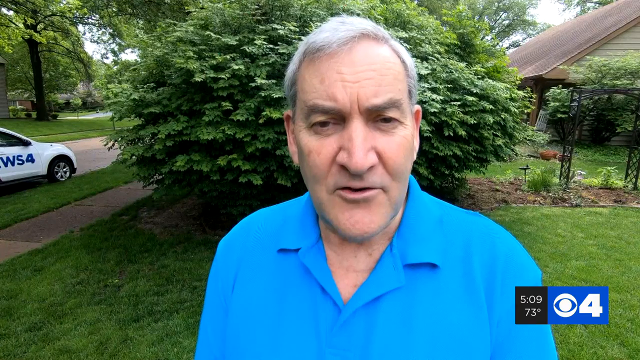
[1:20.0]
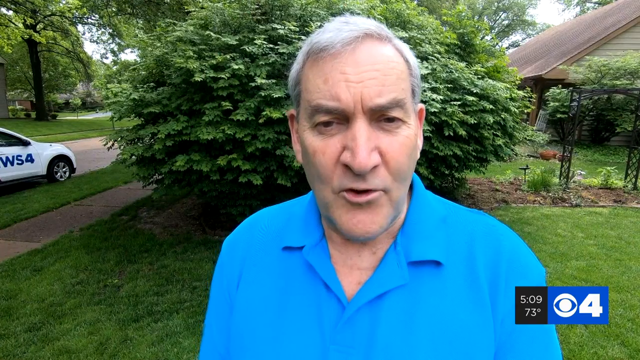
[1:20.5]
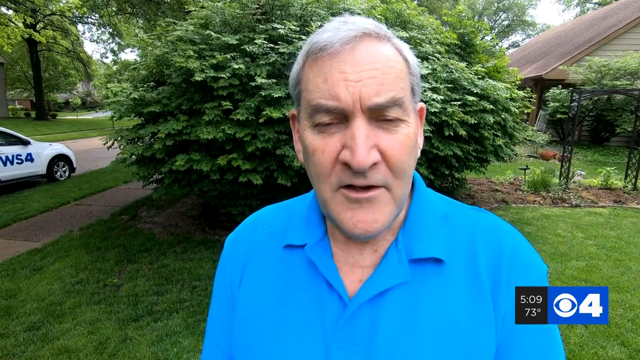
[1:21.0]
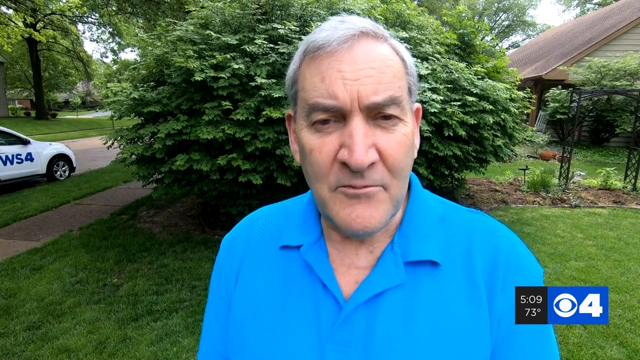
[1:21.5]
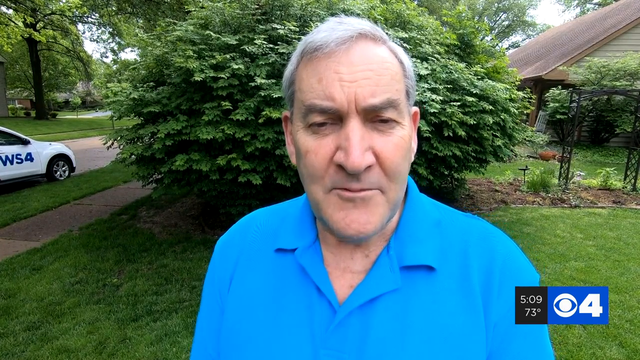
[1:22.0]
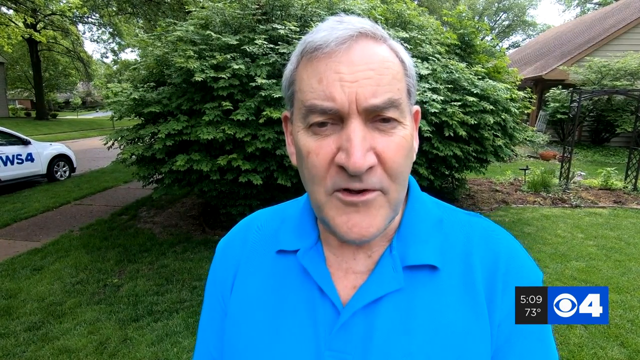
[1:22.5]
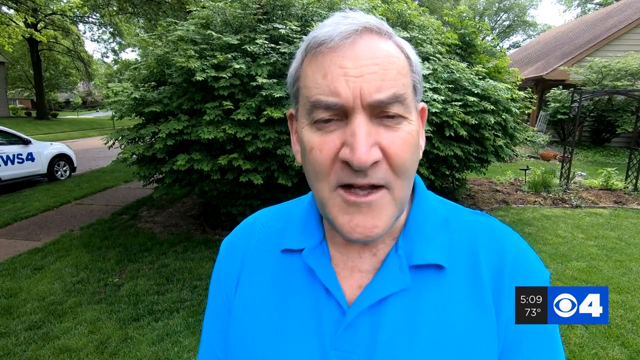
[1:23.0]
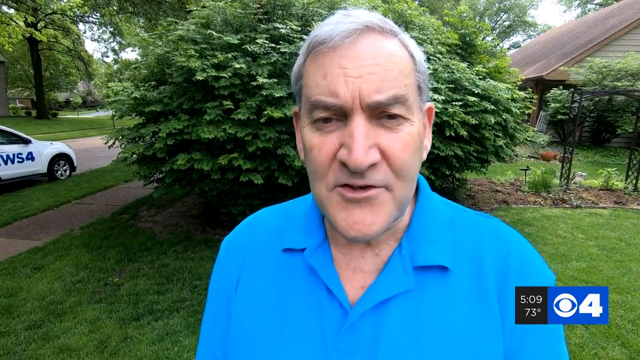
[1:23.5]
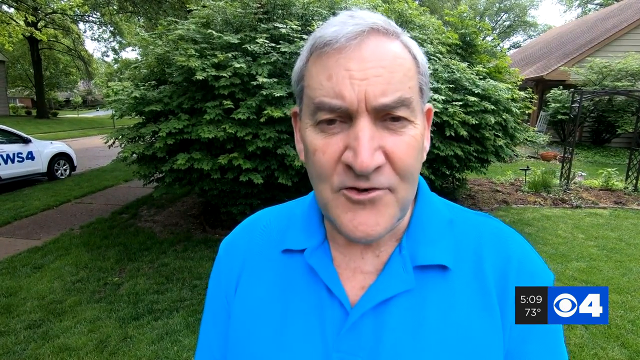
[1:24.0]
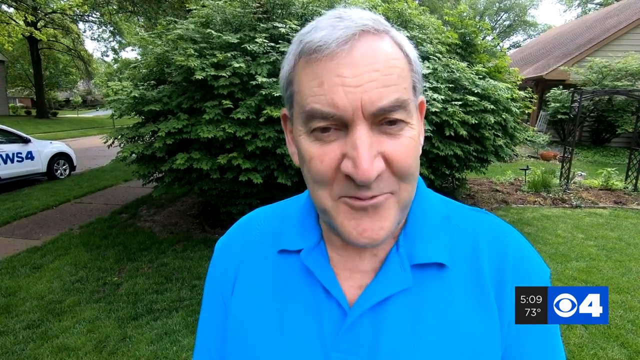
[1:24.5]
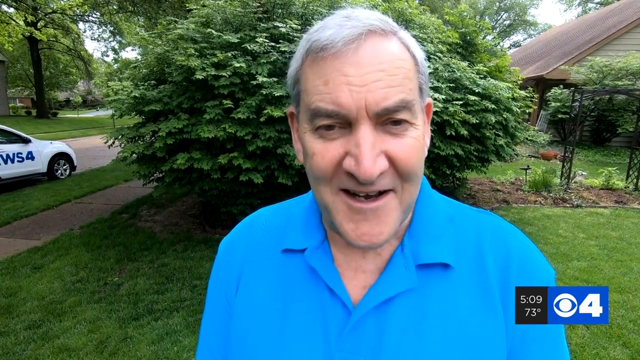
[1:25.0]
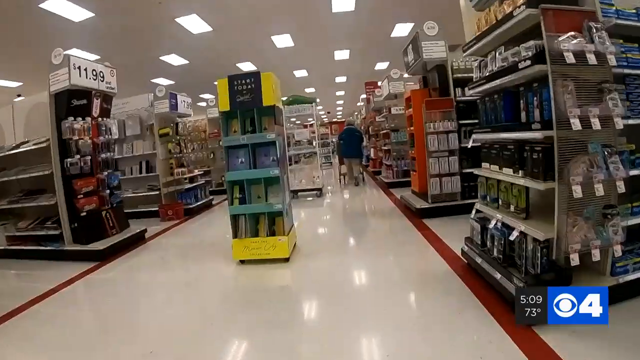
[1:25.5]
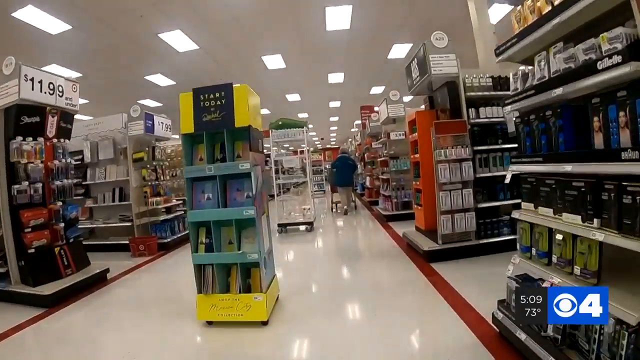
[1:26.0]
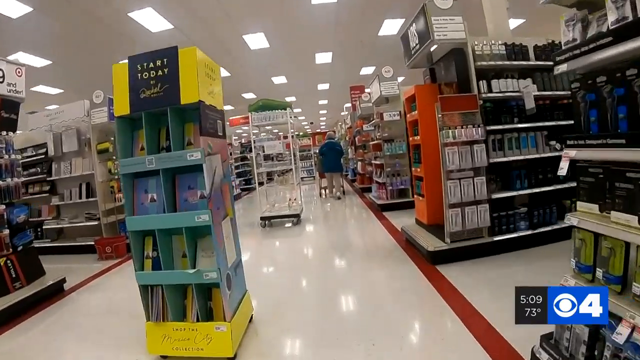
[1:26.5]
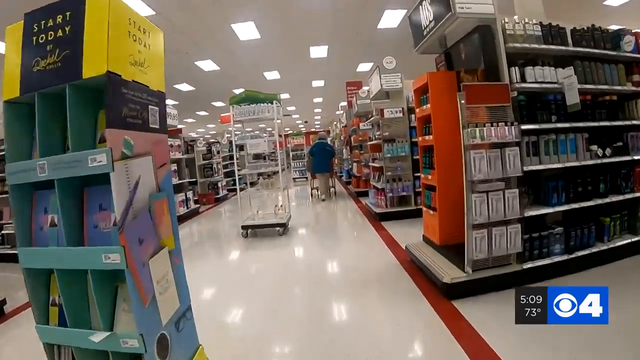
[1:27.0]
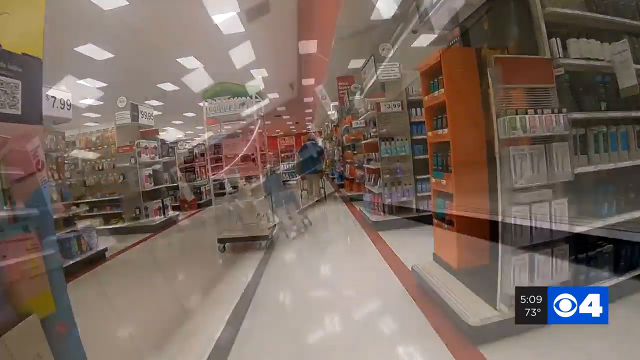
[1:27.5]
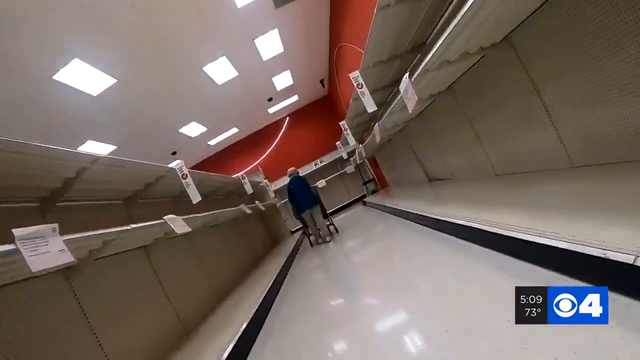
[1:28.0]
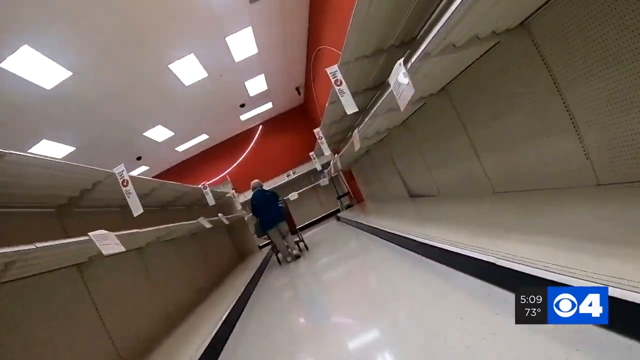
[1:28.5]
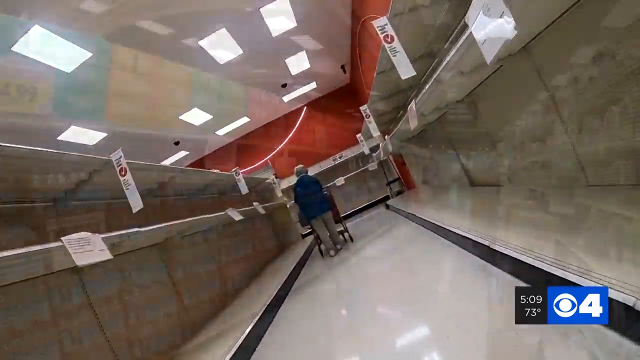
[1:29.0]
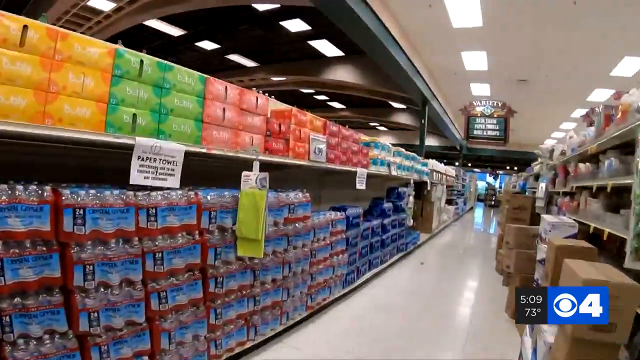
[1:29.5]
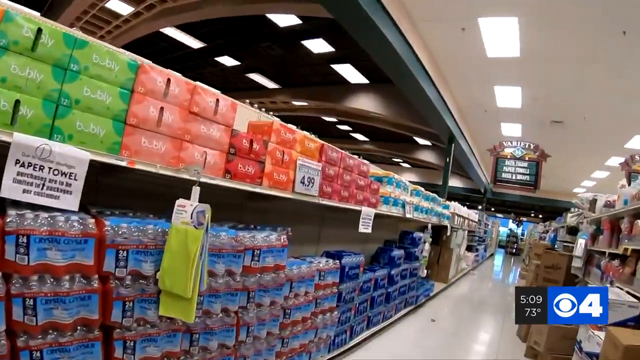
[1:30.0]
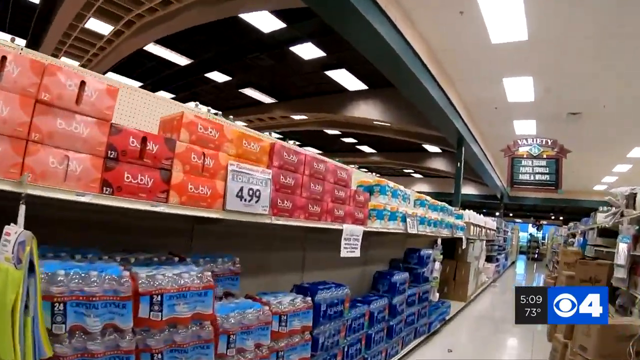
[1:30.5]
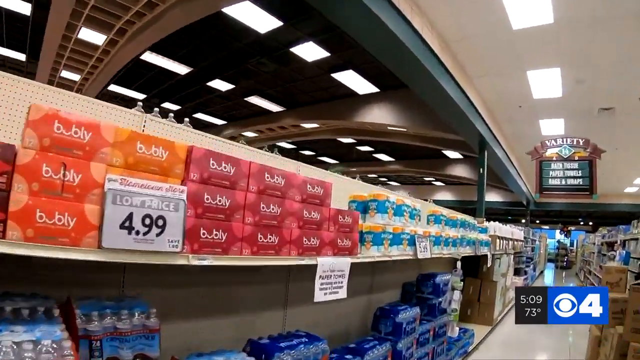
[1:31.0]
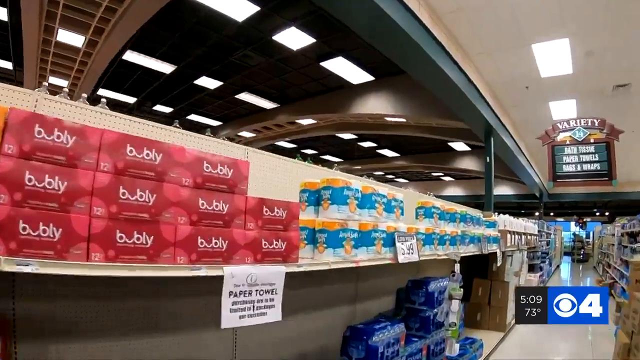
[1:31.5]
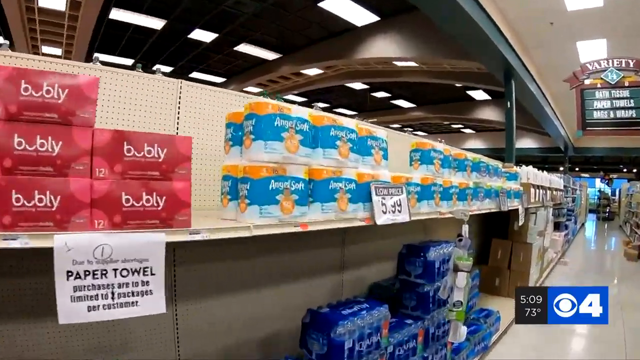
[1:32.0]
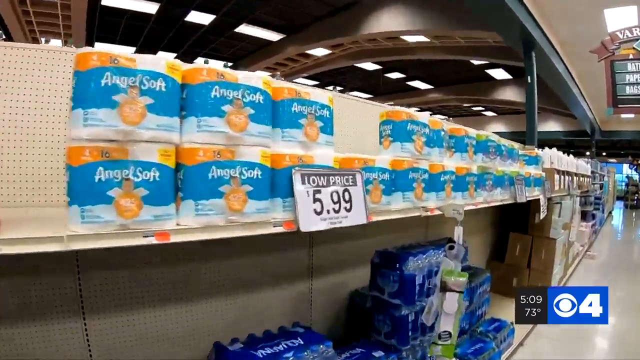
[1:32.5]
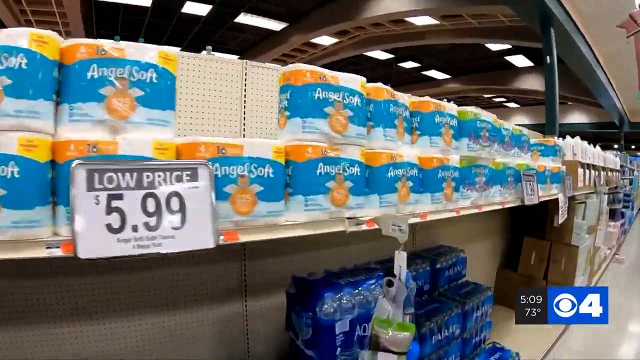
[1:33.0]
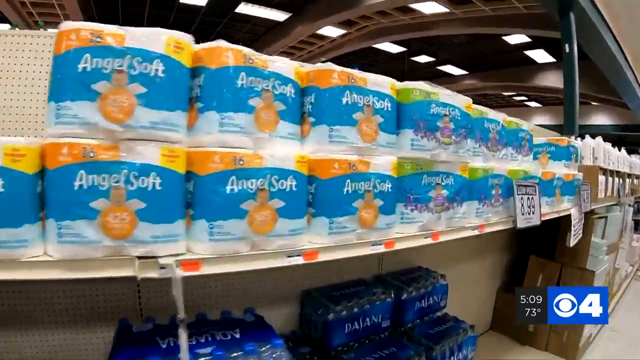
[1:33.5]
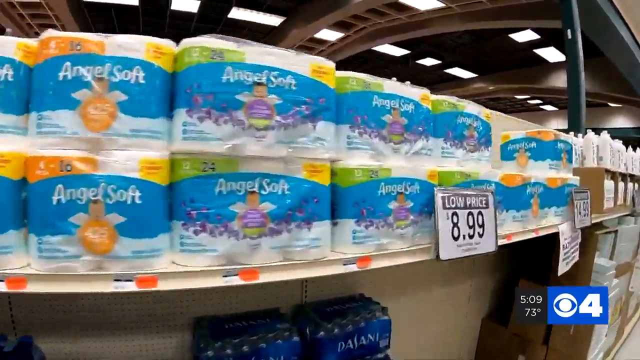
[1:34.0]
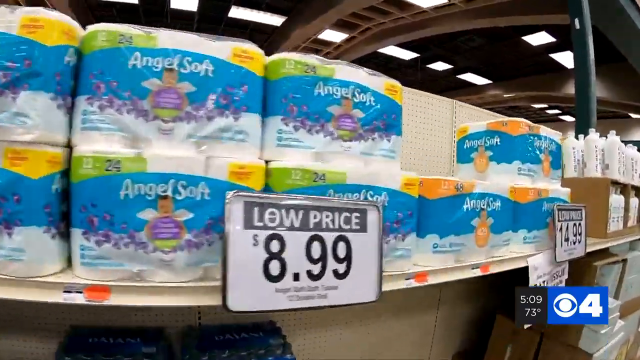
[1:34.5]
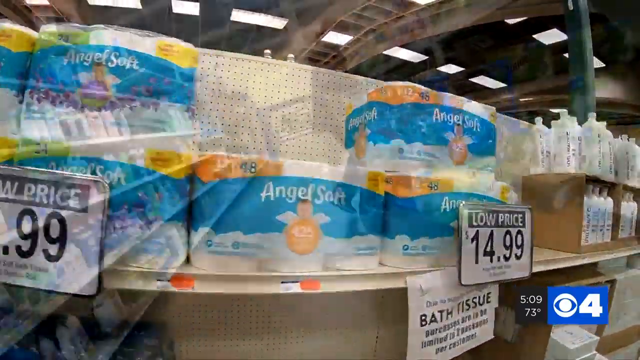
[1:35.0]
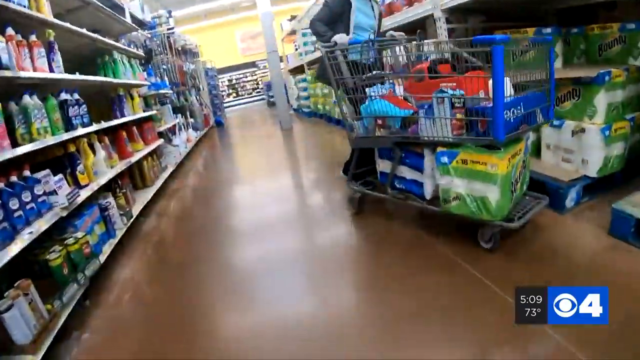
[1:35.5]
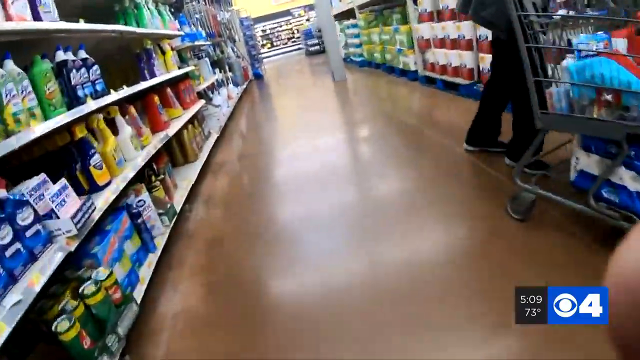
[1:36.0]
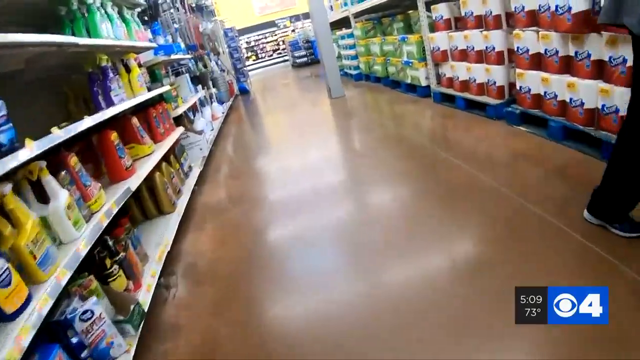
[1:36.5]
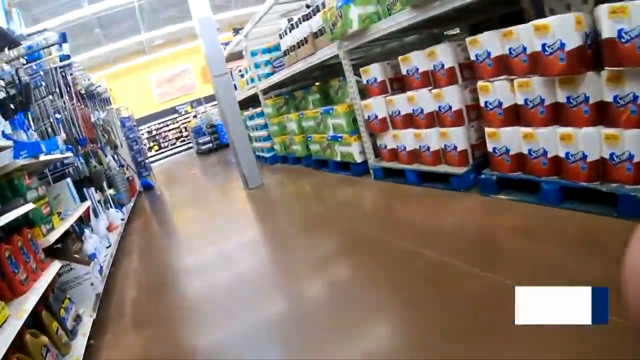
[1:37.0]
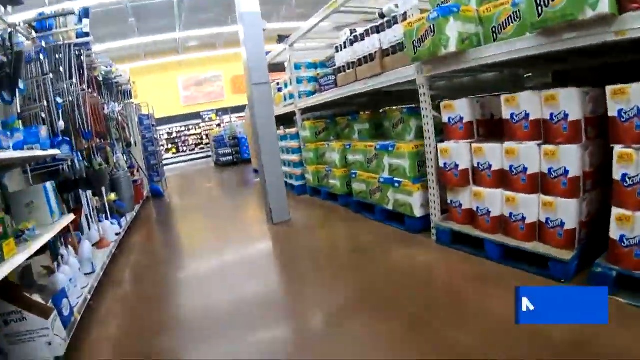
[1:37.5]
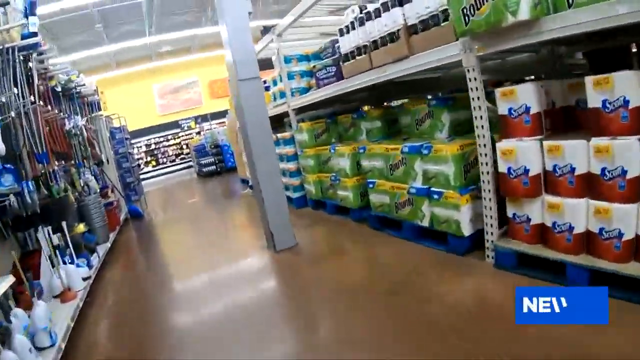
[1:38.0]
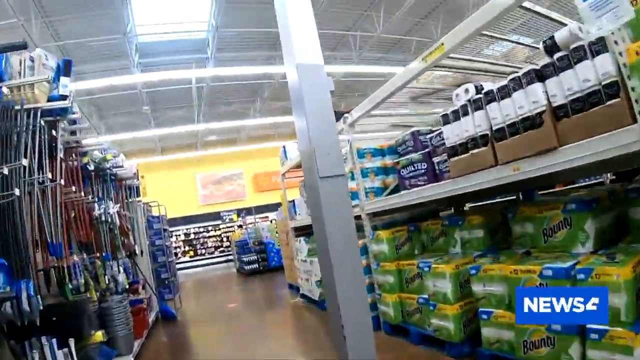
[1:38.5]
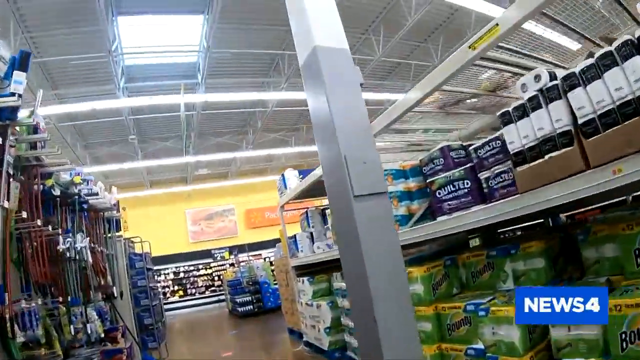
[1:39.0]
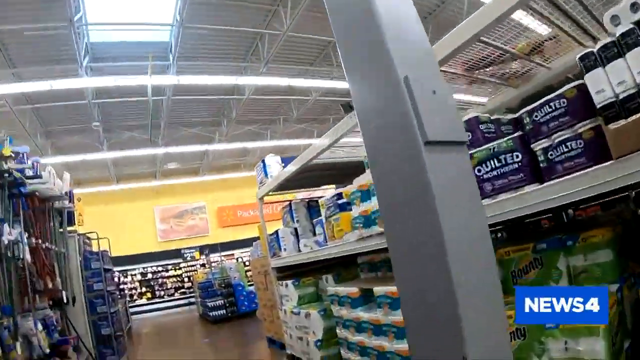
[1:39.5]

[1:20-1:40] A Caucasian man in a blue college shirt, with gray hair and looking to be in his 60s or 70s, appears. A car that looks like a small SUV, apparently a news vehicle, is parked on the side of the street; the last digits that can be made out are "WS4". The video then goes into Target, walking down the aisles behind a man walking in front of the person filming. The person walking down the aisles wears a blue jacket, khaki jeans and a hat. In the aisles where the toilet paper normally is, all the shelves are blank with no items on them. Apparently in a different store, the camera moves down the aisle with the water, which also has some toilet paper: Angel Soft priced at $5.99, bigger bulk Angel Soft at $8.99, and the big Mega Pack at $14.99. In another aisle there are more toilet paper options such as Scott and Angel Soft.